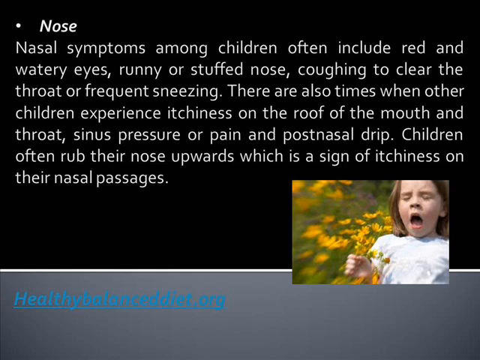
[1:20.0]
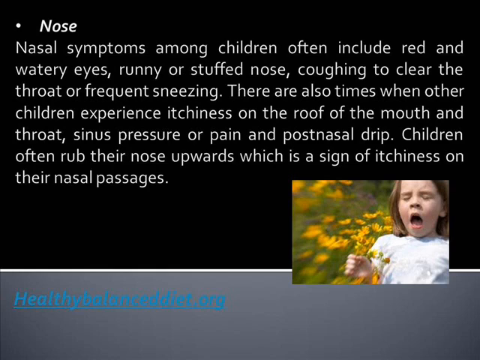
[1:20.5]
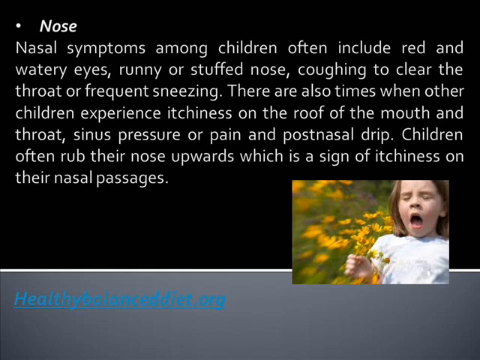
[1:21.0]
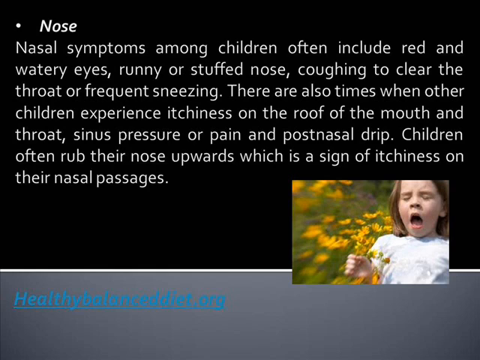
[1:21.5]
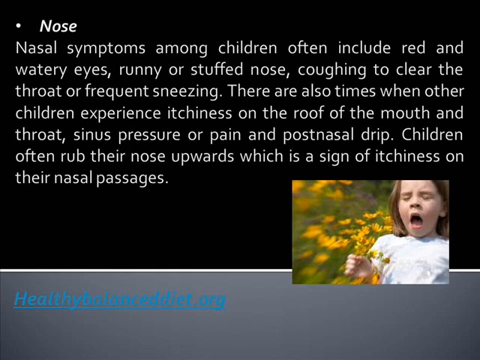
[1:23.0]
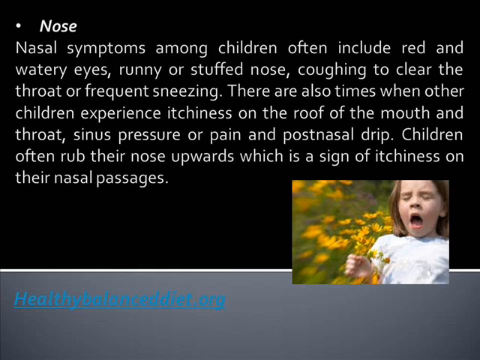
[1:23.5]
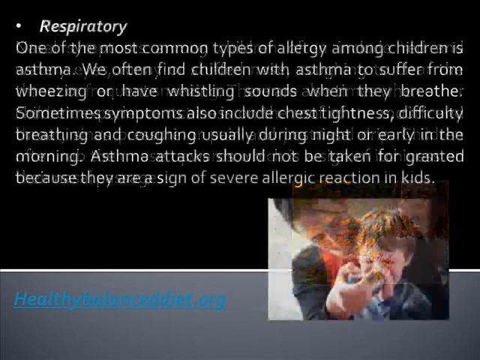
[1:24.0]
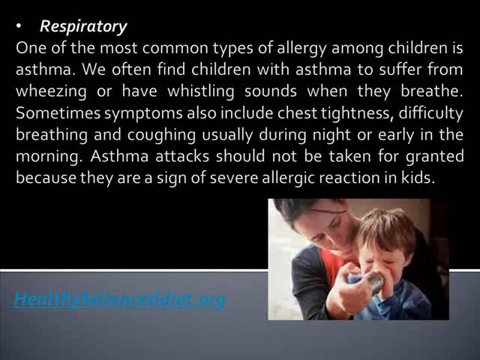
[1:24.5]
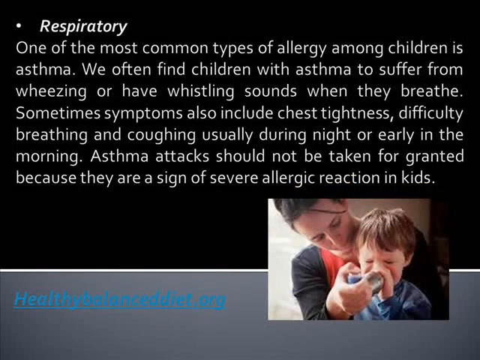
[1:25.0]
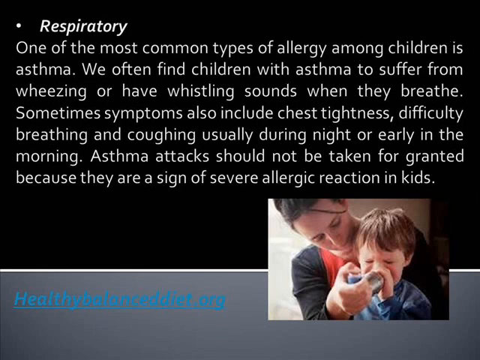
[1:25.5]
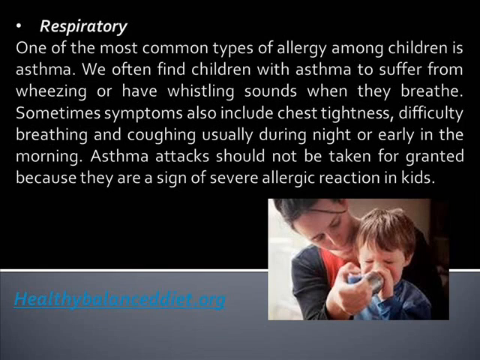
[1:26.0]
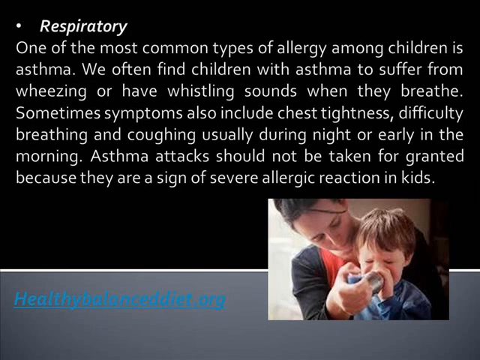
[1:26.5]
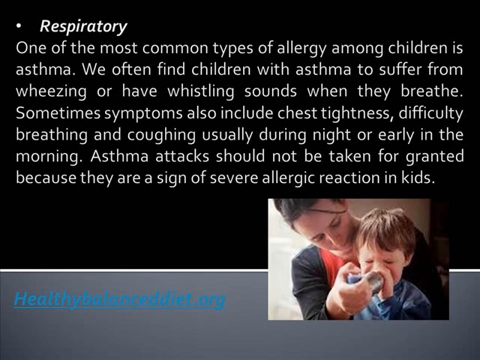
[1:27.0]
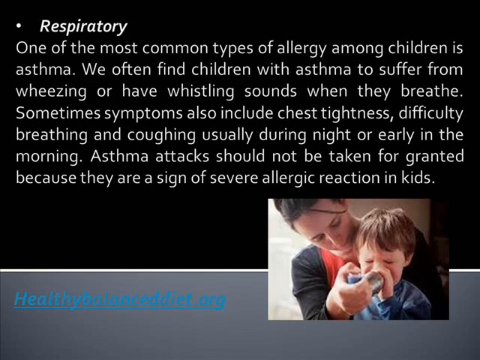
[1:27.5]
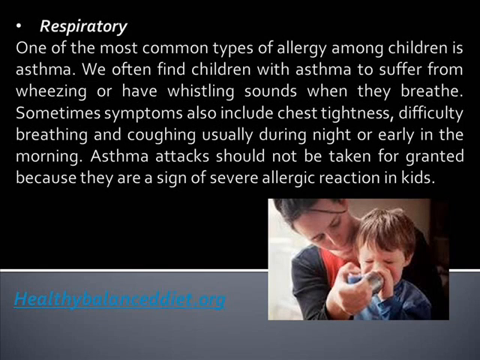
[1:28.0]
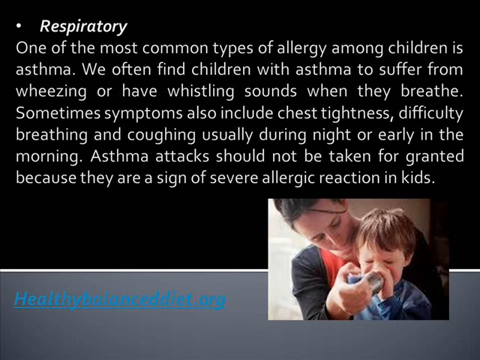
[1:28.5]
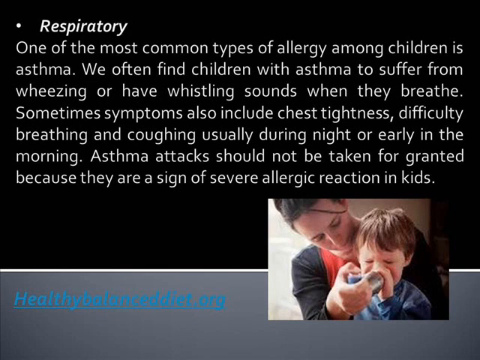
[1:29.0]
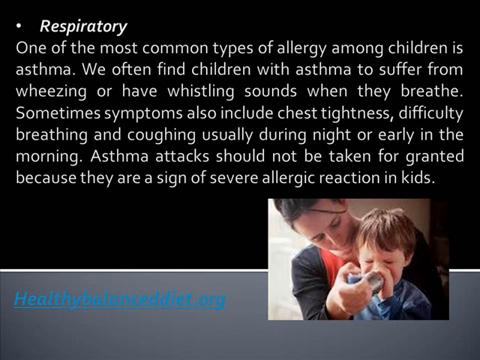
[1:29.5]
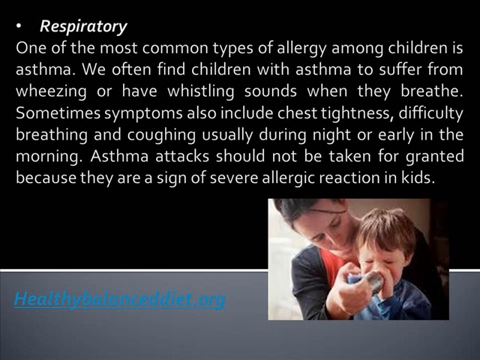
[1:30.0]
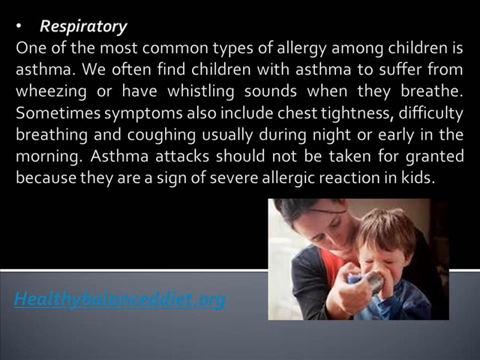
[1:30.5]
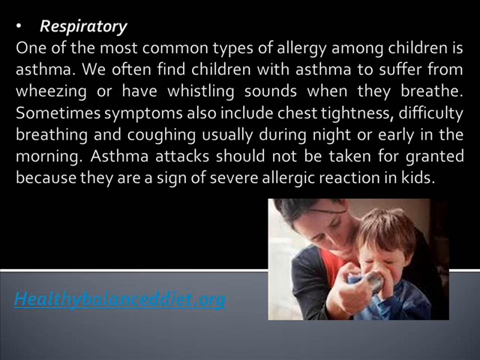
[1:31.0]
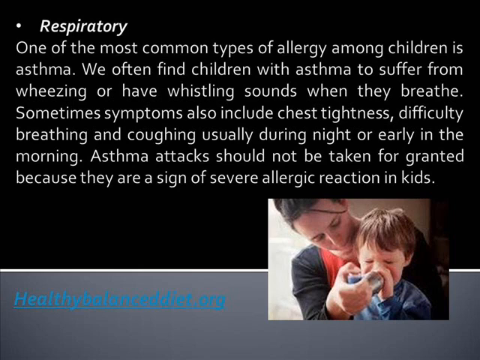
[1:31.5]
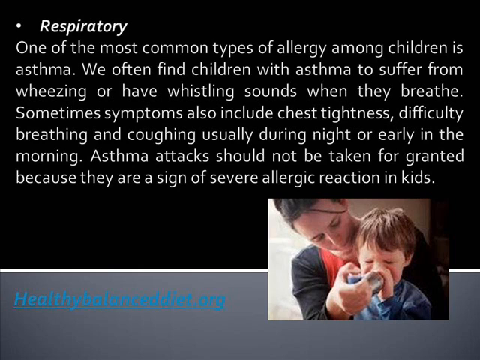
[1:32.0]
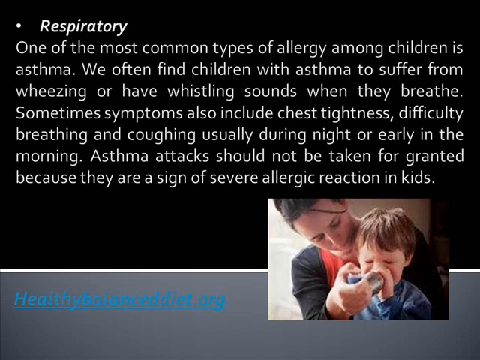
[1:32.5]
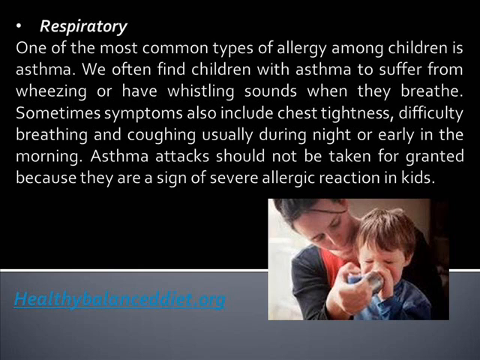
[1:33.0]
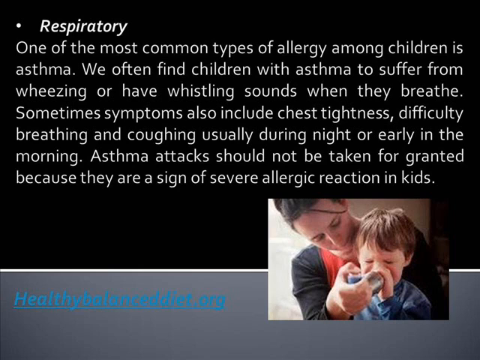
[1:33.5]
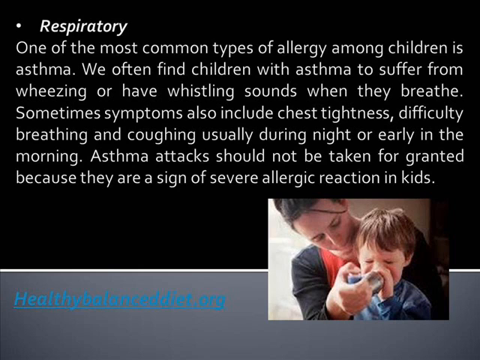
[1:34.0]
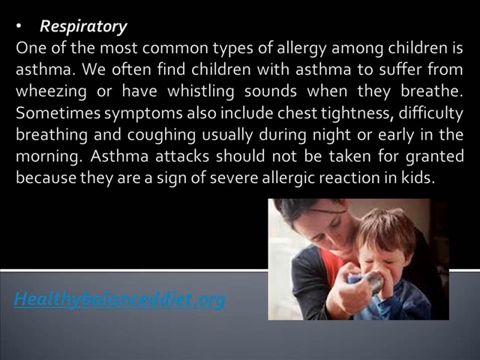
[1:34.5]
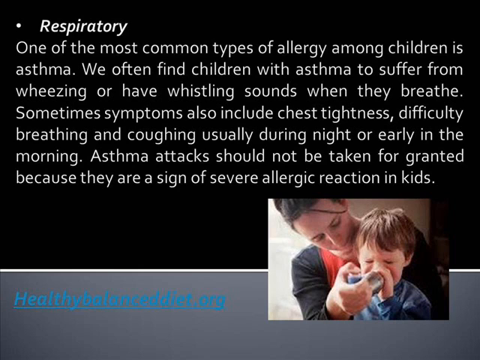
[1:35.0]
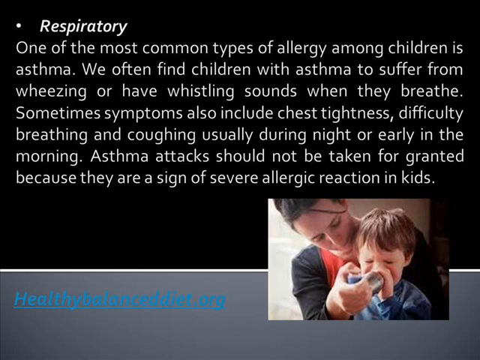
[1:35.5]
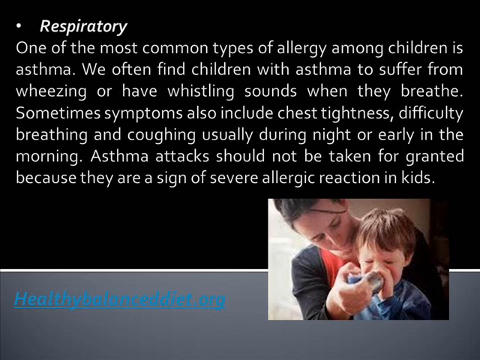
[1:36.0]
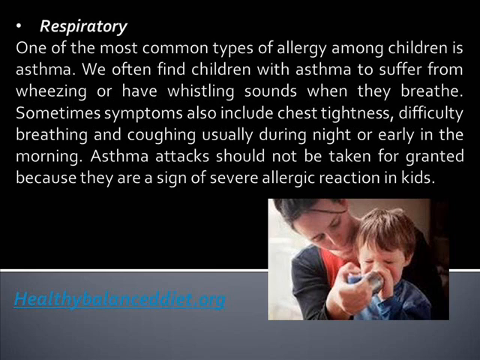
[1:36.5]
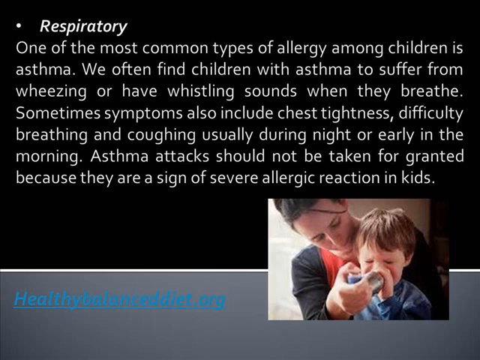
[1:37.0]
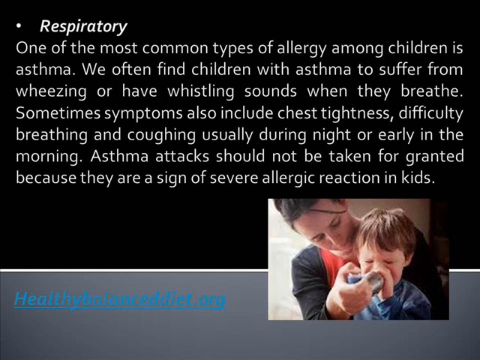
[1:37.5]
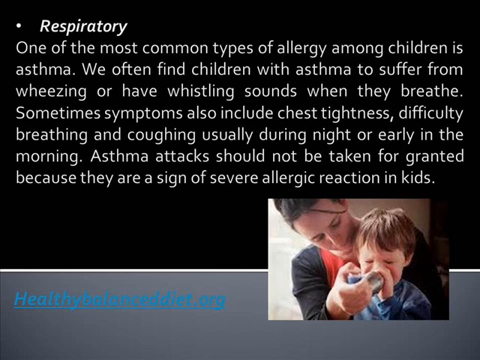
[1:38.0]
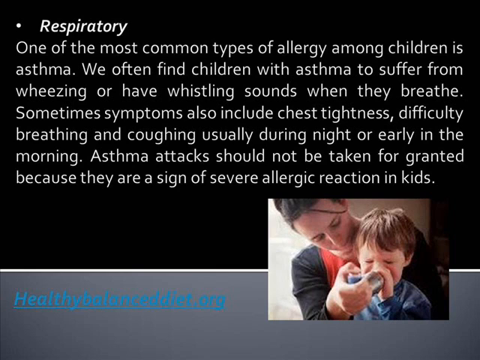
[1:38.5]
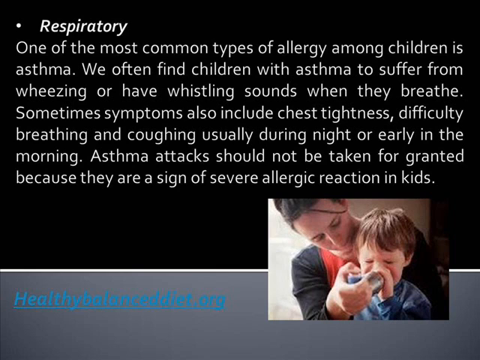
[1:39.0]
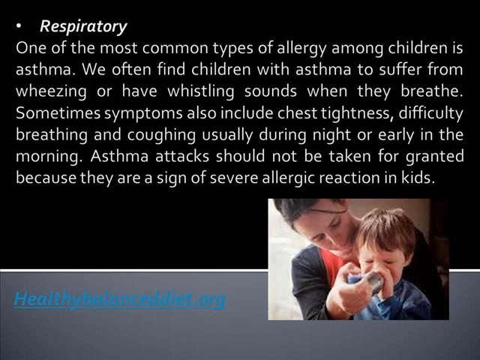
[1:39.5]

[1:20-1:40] Another graphic appears, still on the black and gray background, titled "Respiratory" with a bullet point. Underneath it reads, "One of the most common types of allergy among children is asthma. We often find children with asthma to suffer from wheezing or have whistling sounds when they breathe. Sometimes symptoms also include chest tightness, difficulty breathing and coughing usually during night or early in the morning. Asthma attacks should not be taken for granted because they are a sign of severe allergic reaction in kids." The photo in the bottom right has changed to a boy sitting on a woman's lap; she appears to be administering an inhaler to him, holding it in her right hand. He is grimacing or closing his eyes, looking like he is not feeling well, and wears a dark blue shirt and has short brown hair. Both are Caucasian. They may be sitting in front of a window, since the left side is illuminated, and a little of a tan wall shows in the upper right background. The woman has black hair pulled back into a bun, cut off at the top of her head, with a single strand of hair coming across to the right on her forehead. She looks down at him and wears a black long-sleeve shirt with a red shirt underneath.